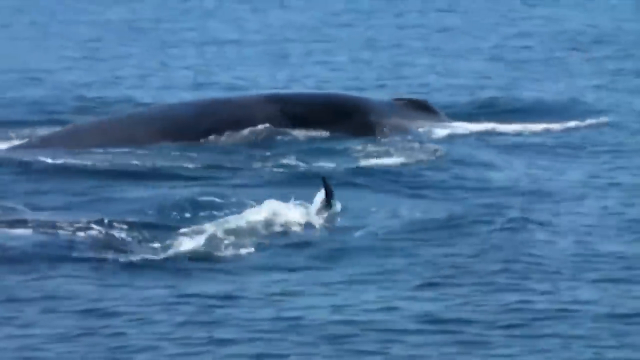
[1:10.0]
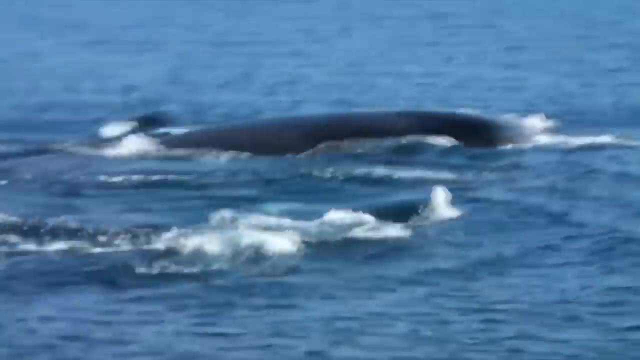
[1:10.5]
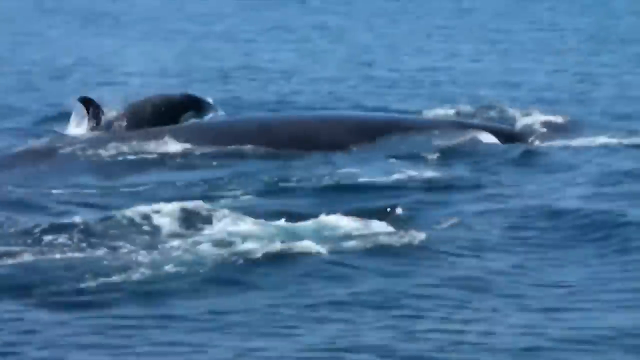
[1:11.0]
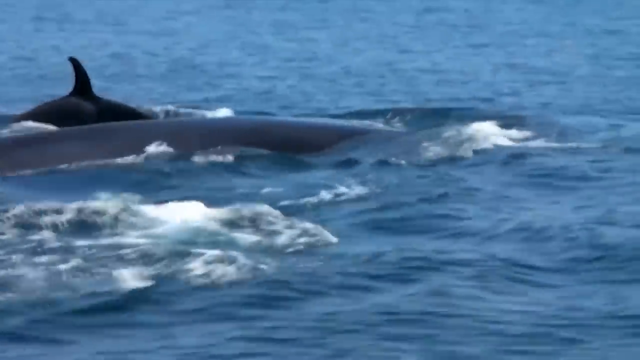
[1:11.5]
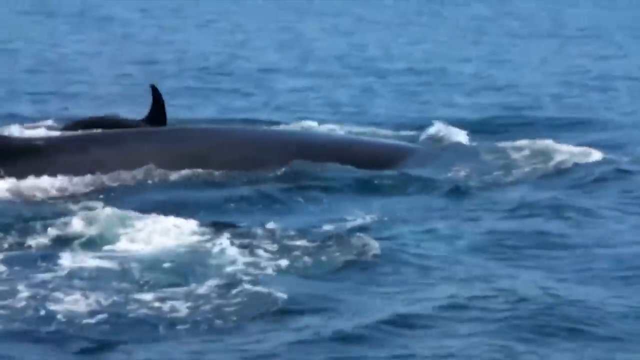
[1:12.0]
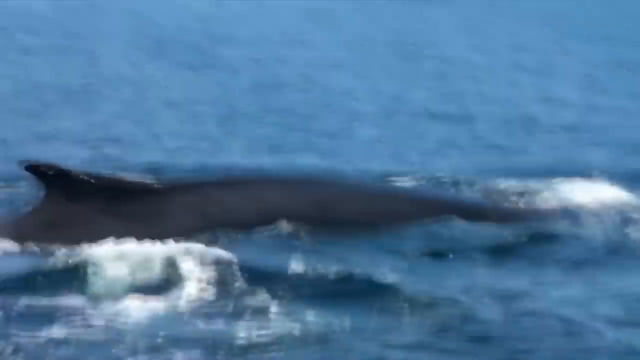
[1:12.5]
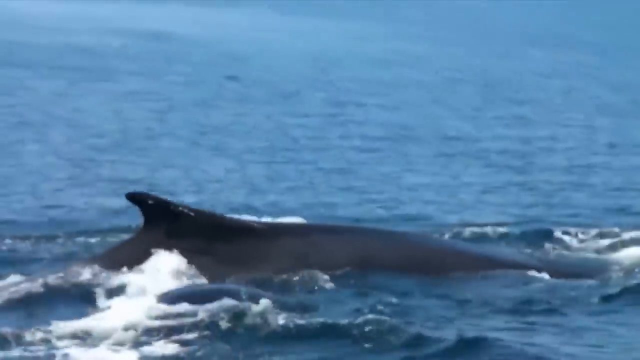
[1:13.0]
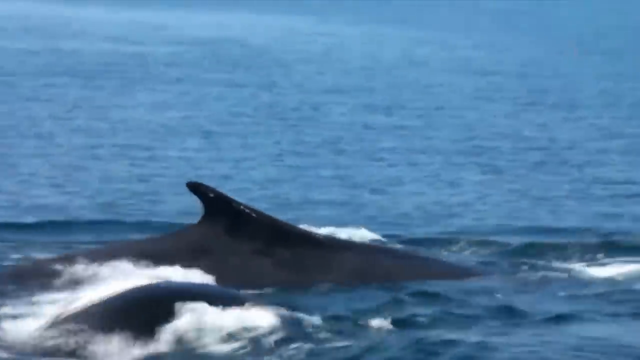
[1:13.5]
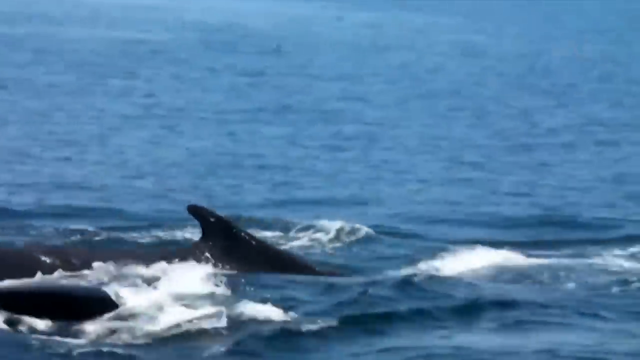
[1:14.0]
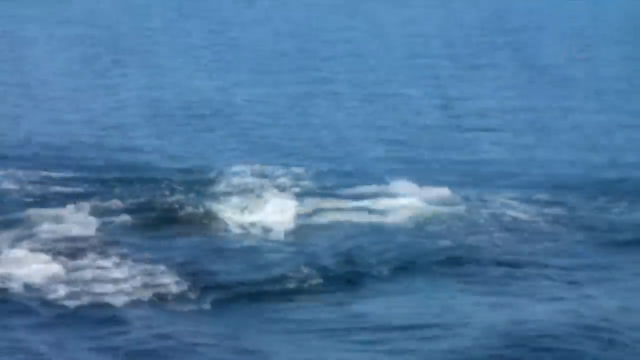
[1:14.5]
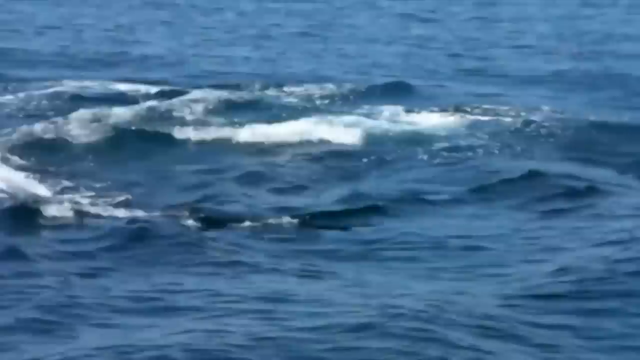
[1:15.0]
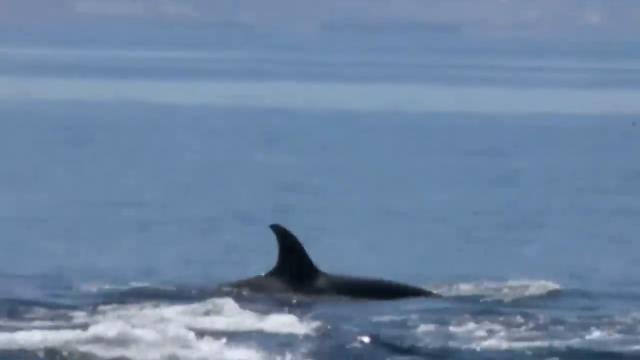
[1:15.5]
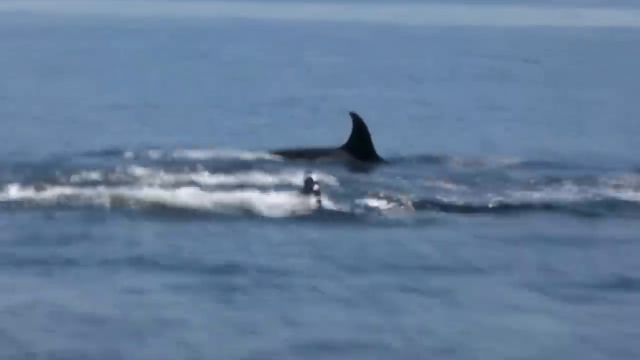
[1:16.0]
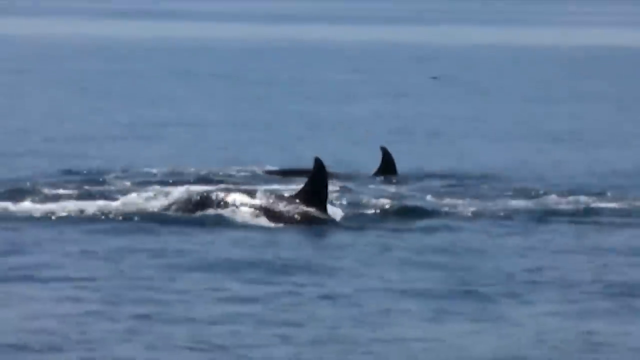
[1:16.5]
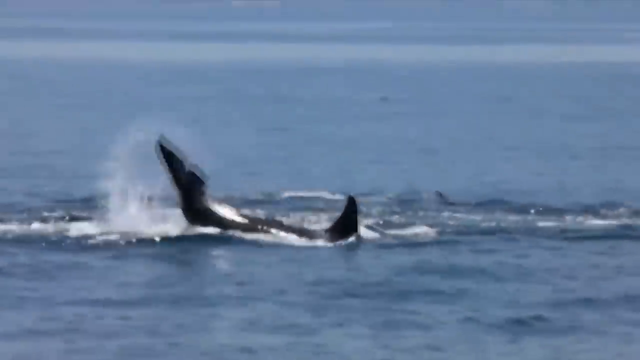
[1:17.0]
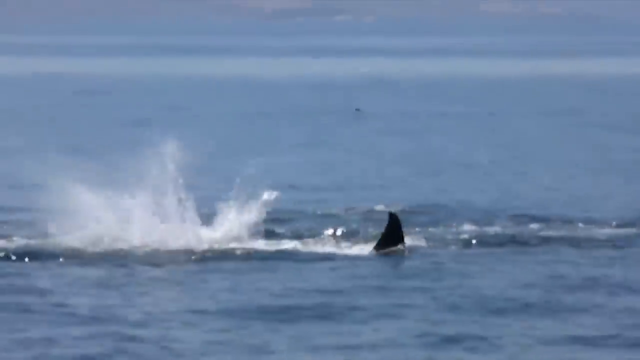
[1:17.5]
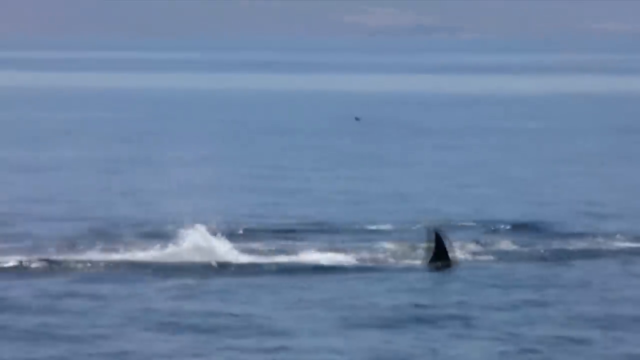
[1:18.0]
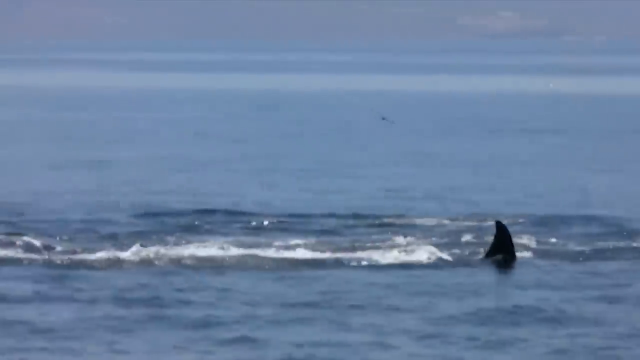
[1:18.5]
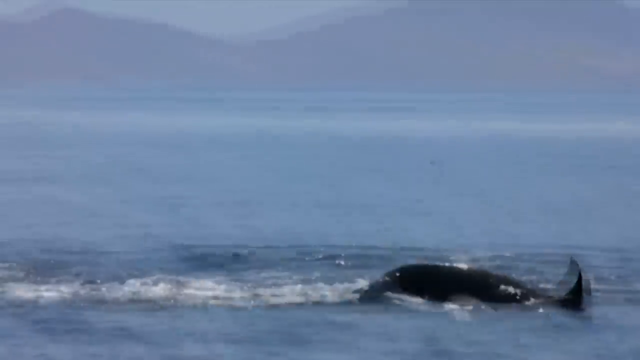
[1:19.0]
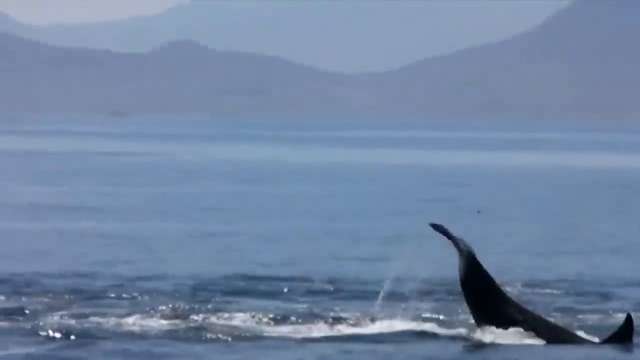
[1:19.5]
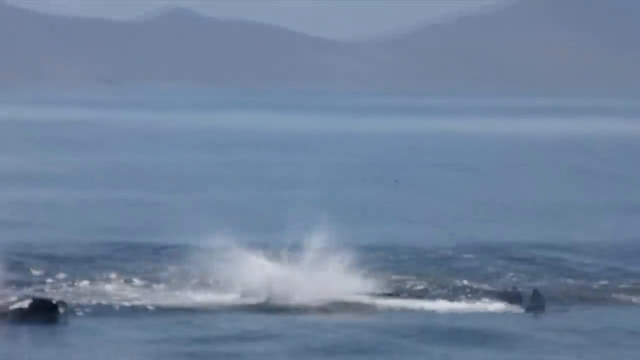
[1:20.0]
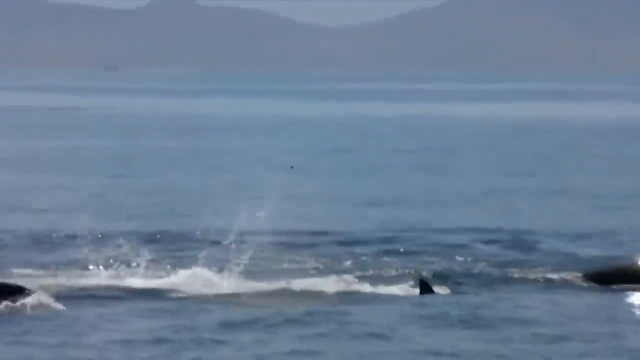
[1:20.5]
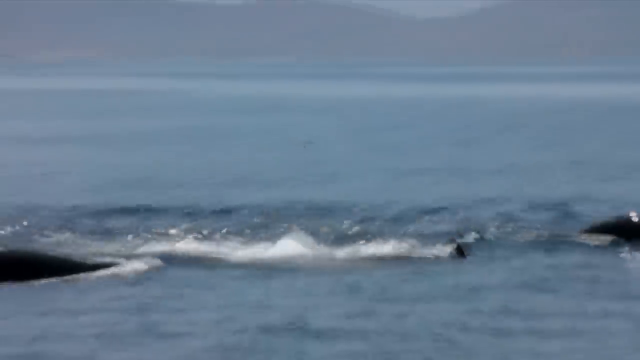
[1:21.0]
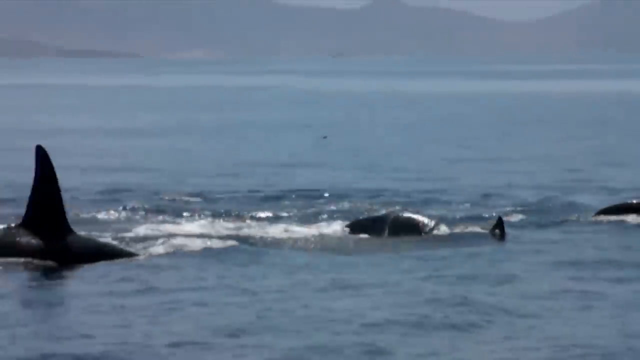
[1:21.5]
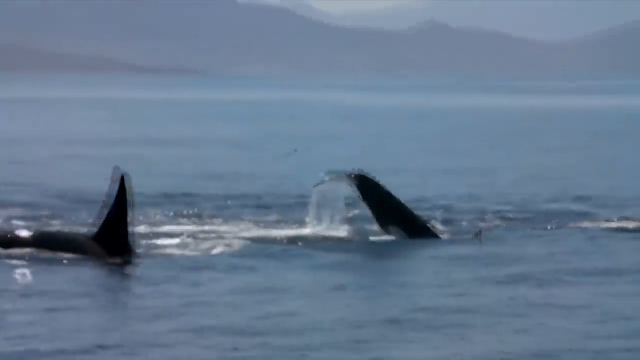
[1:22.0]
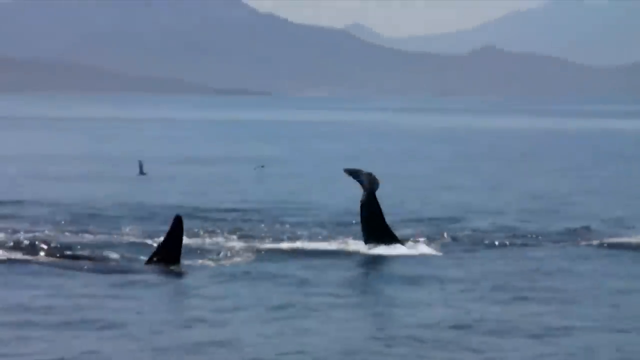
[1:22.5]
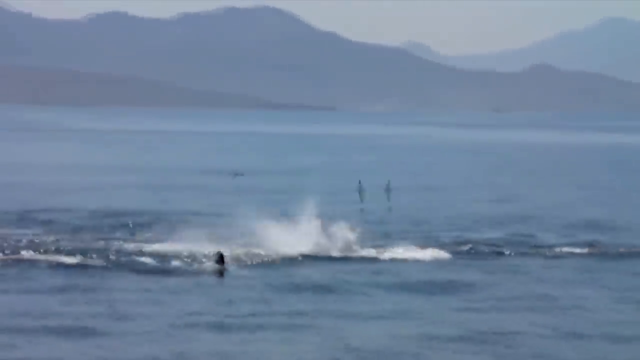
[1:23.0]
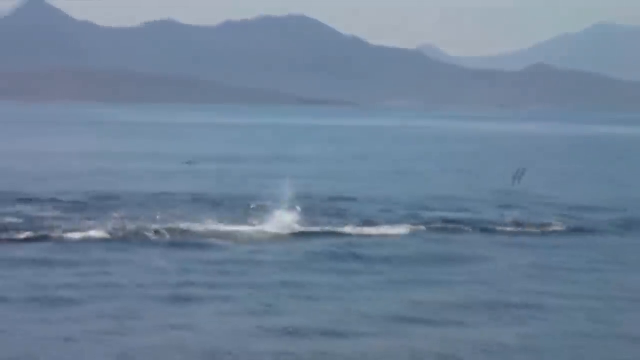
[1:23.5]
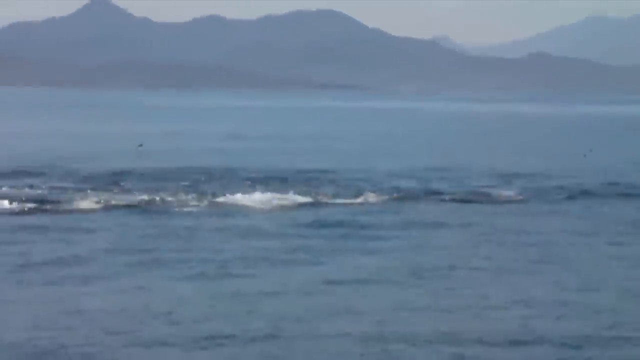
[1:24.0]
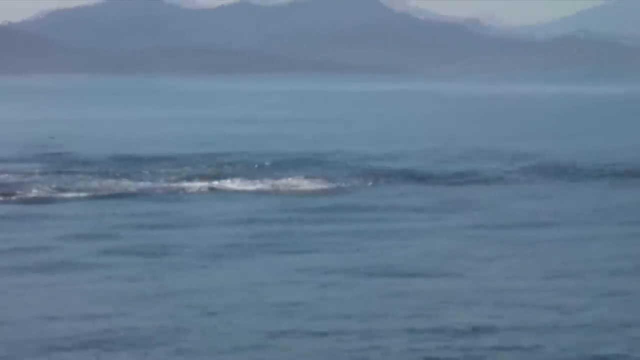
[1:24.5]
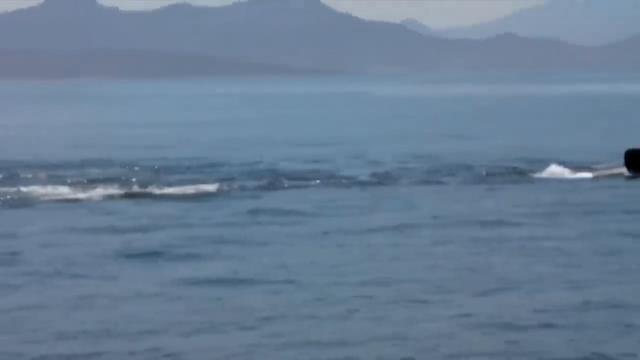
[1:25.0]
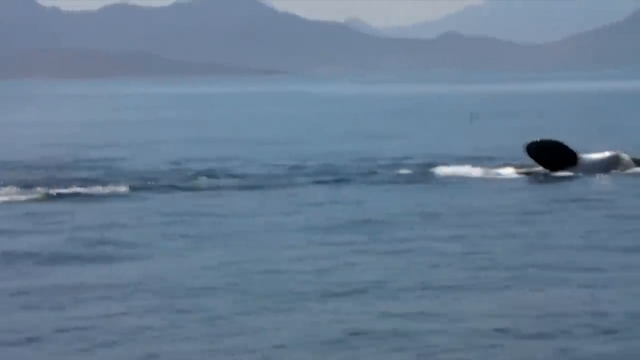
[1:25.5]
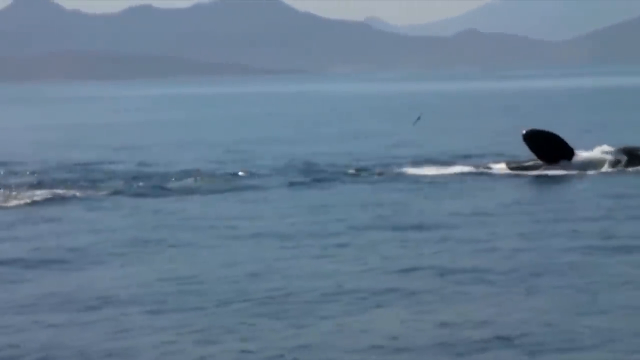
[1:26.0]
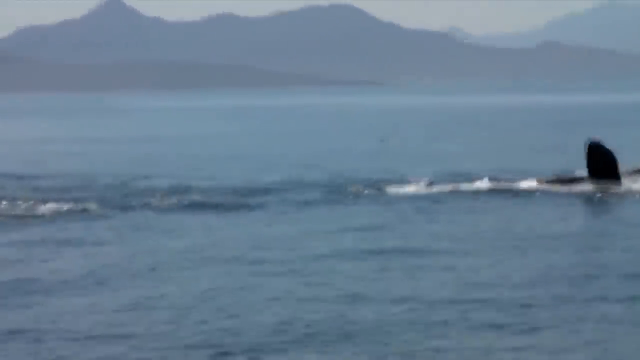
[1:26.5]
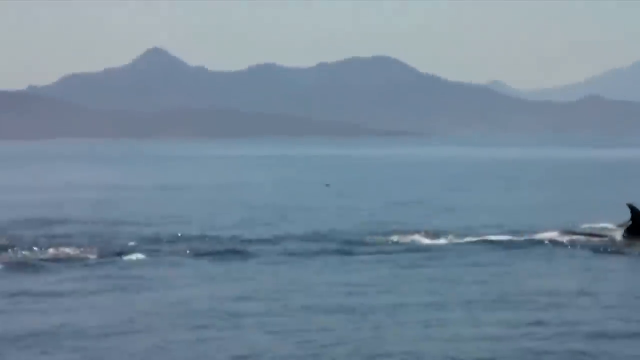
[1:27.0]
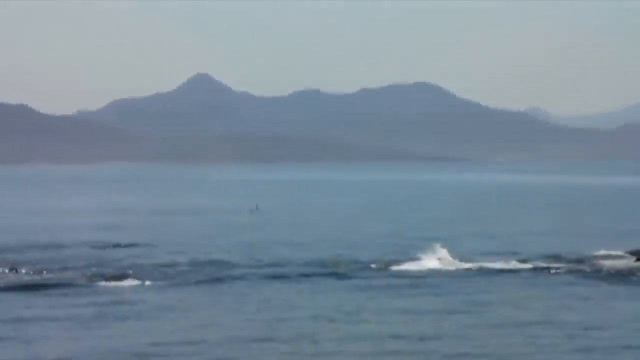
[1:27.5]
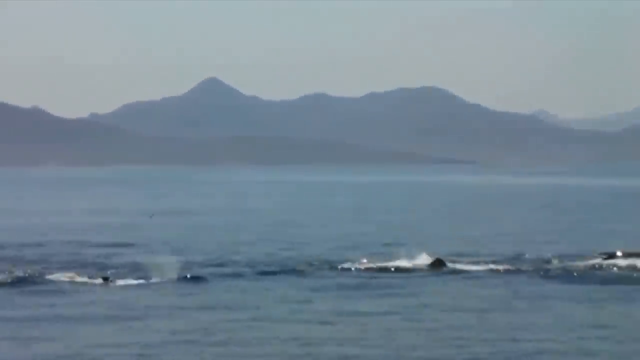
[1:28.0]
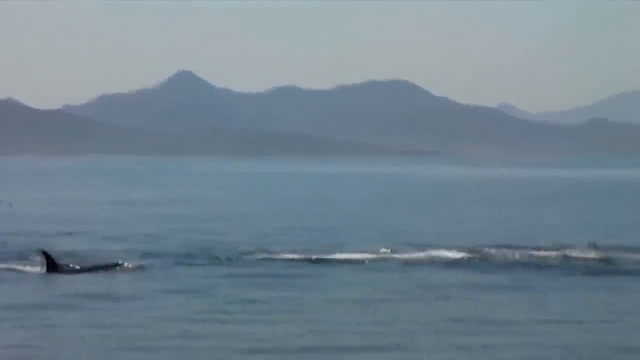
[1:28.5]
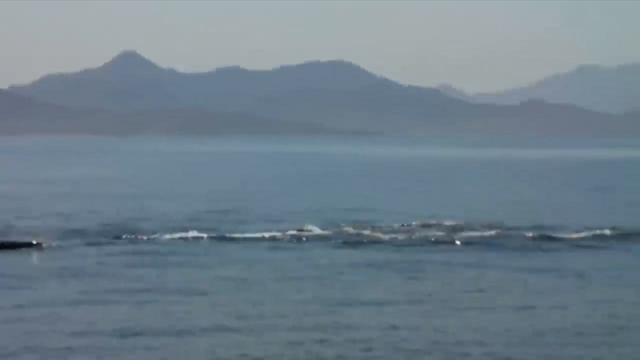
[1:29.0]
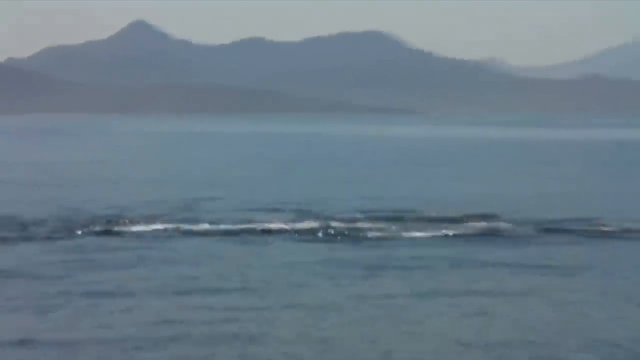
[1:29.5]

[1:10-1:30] The large blue or humpback whale is in the middle of the group of whales, with a pod of orcas swimming alongside: one off to the left-hand side of the large whale and two or three more off to the right-hand side. They alternate which whales breach the surface and then disappear back below. The video cuts to a different scene of orcas breaching the surface with their dorsal fins exposed. The one closest to the camera breaches; the front of the whale disappears below but the dorsal fin remains above the surface while the tail slaps the water, sending a huge burst of water upward. It slaps the water a second and a third time, with water erupting each time. A bird comes swooping down just above the surface of the water. The orcas continue swimming, and the one in front turns on its side so that its lateral fin is visible above the water along with its white underbelly, exposed to the camera.